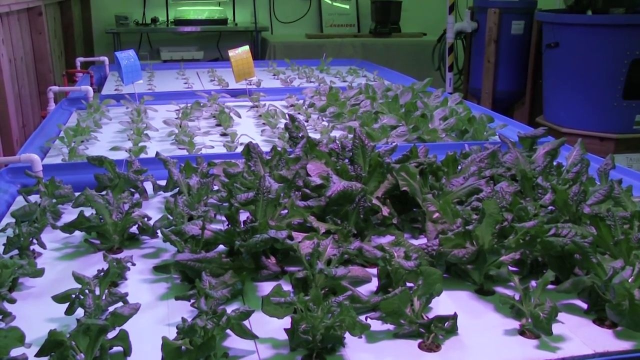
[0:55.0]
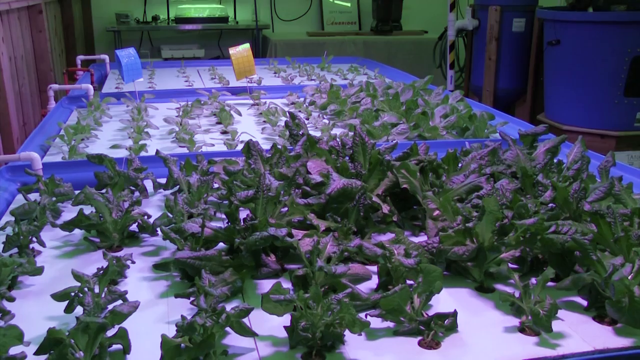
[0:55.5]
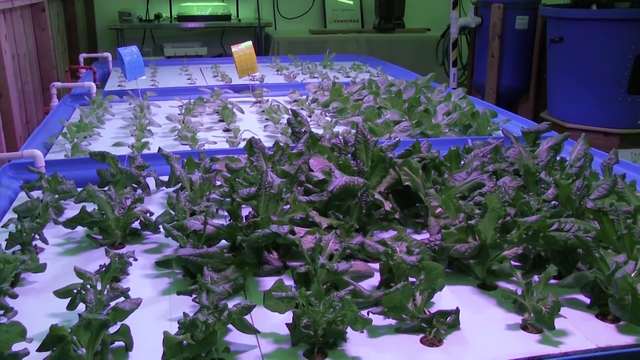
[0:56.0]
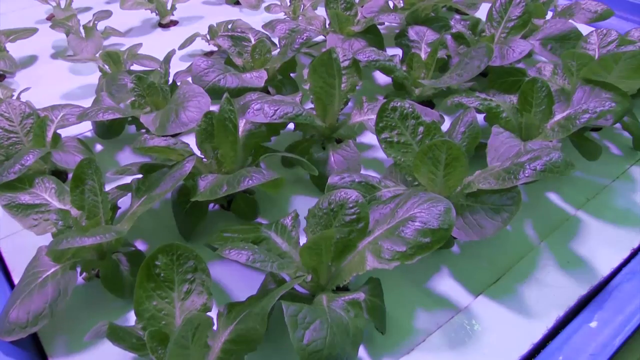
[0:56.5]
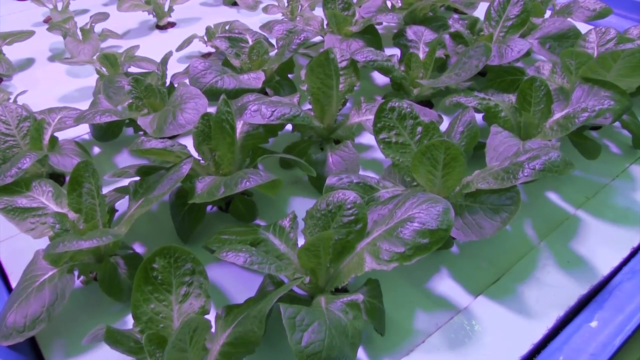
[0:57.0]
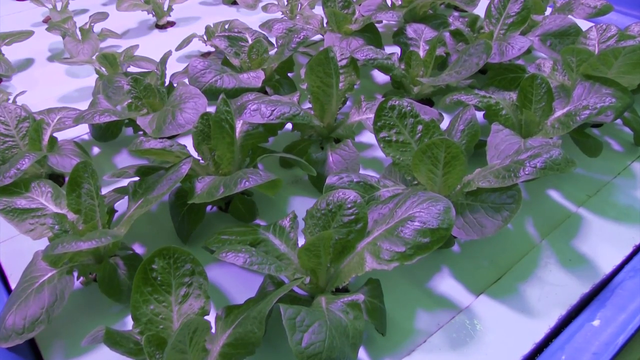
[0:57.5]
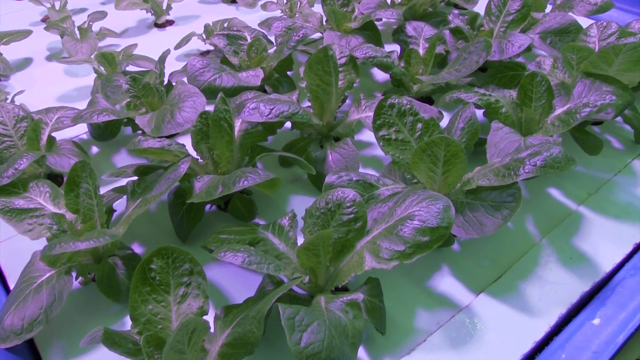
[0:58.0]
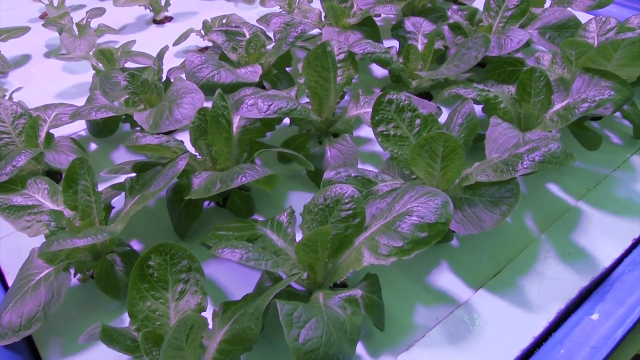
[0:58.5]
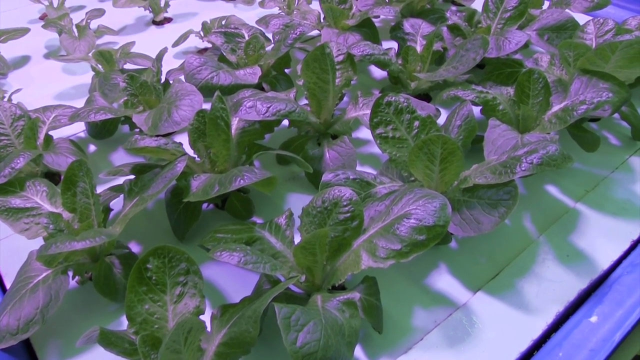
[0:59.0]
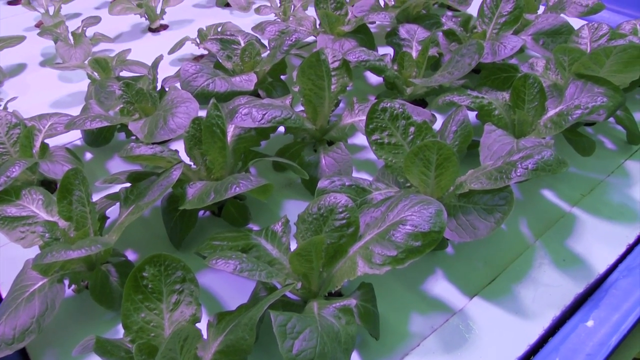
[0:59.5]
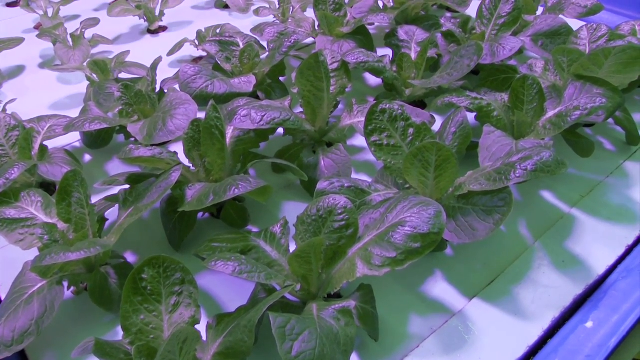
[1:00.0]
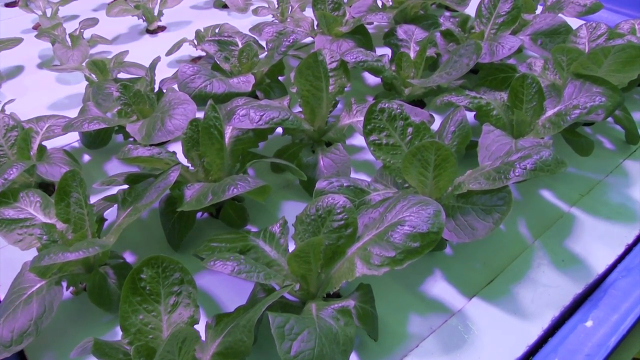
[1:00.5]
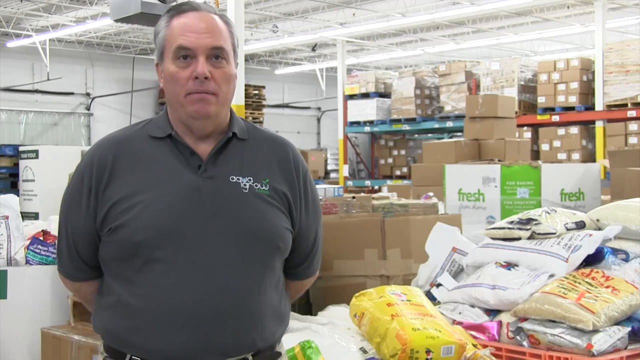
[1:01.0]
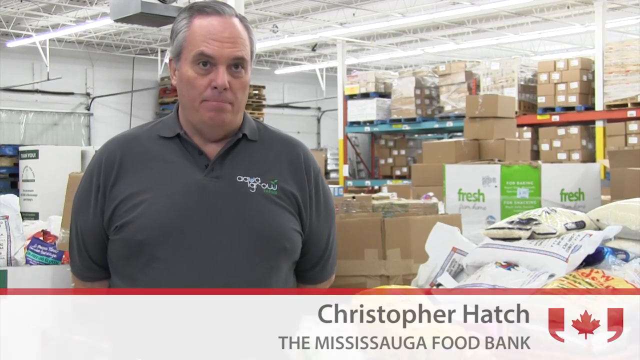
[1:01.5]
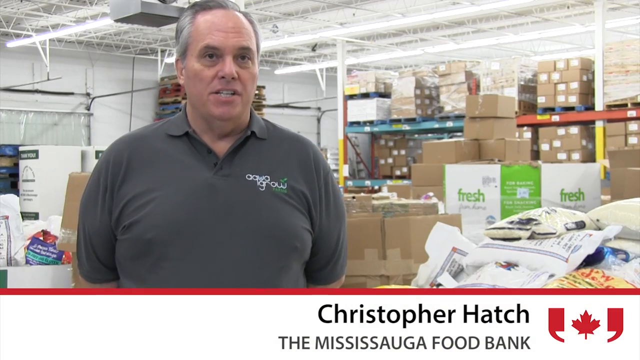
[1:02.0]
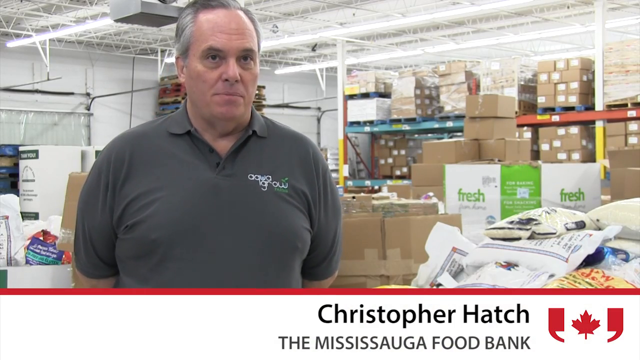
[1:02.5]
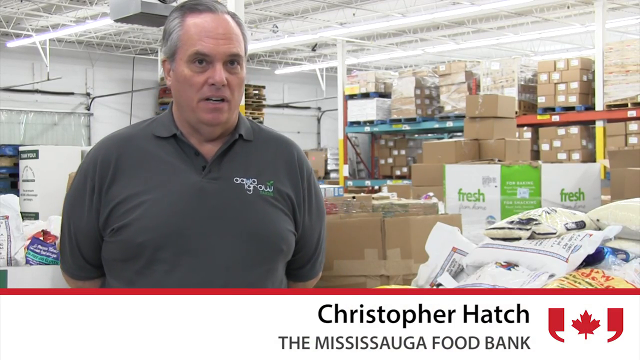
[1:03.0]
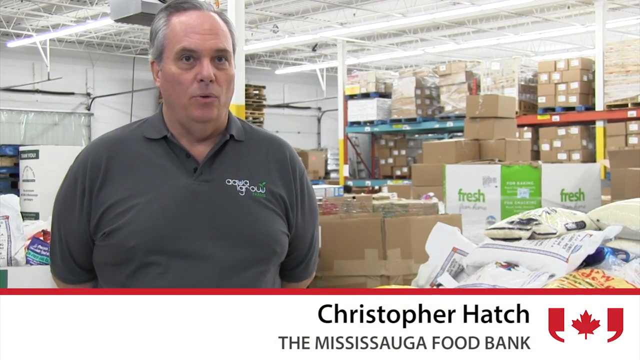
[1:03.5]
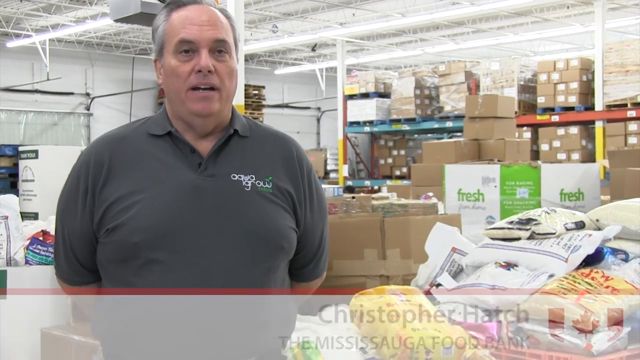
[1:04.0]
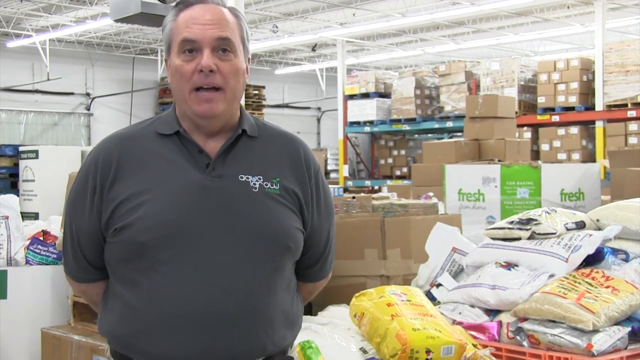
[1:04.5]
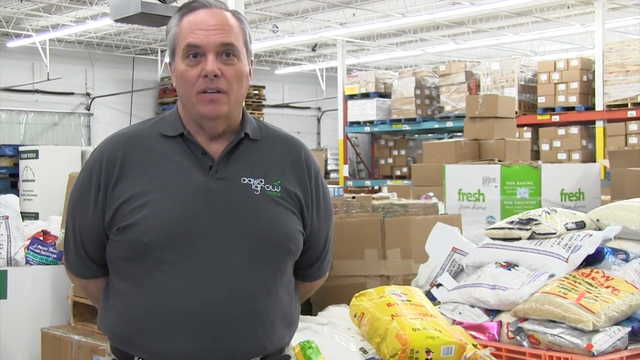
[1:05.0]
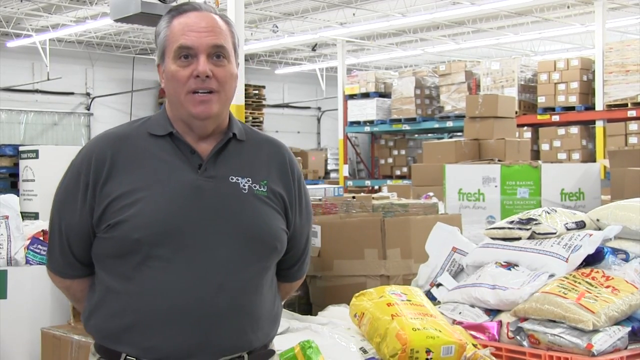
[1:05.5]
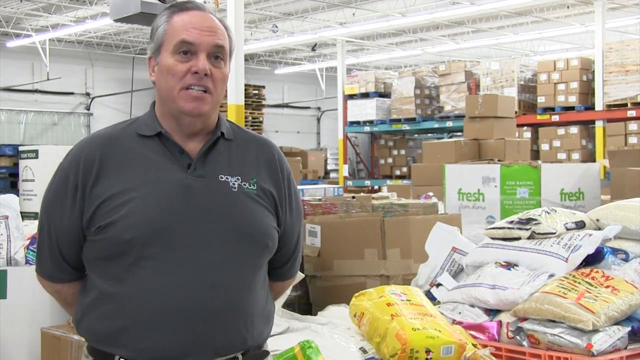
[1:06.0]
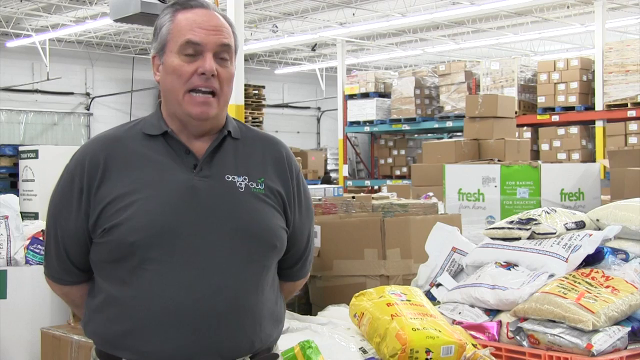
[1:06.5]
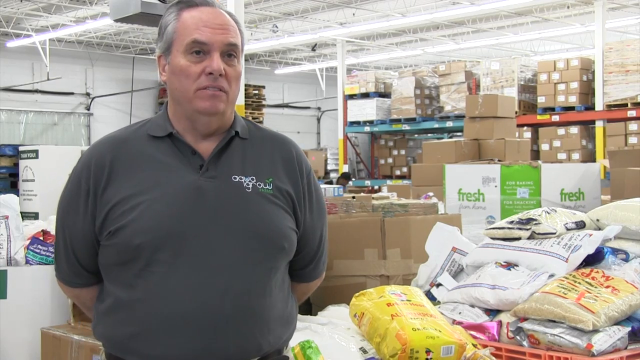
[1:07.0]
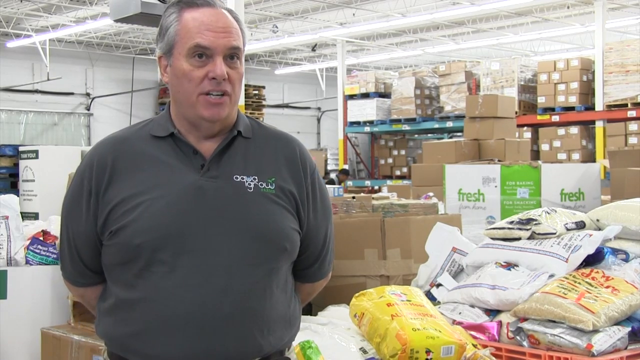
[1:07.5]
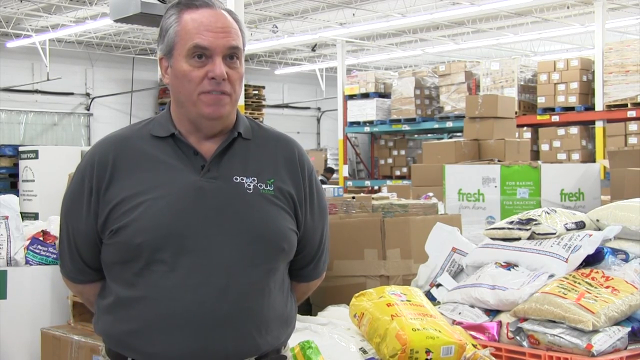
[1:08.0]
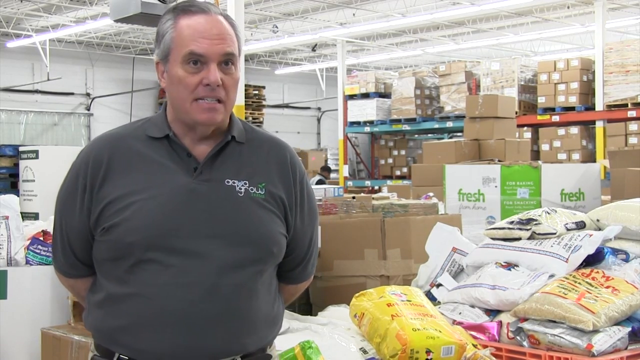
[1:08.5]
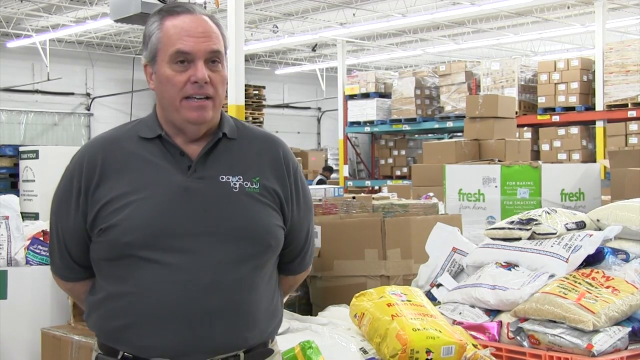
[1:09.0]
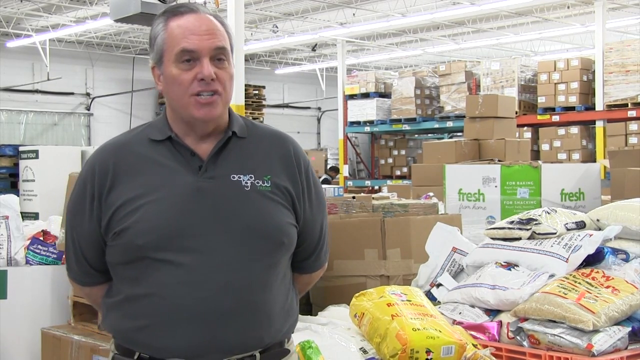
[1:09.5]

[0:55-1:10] Three trays of plants with green leaves float on white foam in what appear to be blue plastic water tanks. In a close-up, the plants look almost like lettuce or spinach, with many big flat leaves clustered around a center point. They float on what looks to be white foam with holes poked in it, so the plant sits on top of the foam with its roots dangling into the water below. The light is a bit muted. Another employee appears, and the white information bar at the bottom identifies him as "Christopher Hatch" of the "Mississauga Food Bank", with a Canadian flag in the lower right-hand corner. He is a somewhat overweight white man, apparently older, maybe about 50-something, with gray and white hair, wearing a gray polo shirt with a white logo on the upper right side. The setting is a warehouse-like space with many bags of food and boxes in the background. He talks very earnestly, standing with his hands behind his back. To his right there appear to be bags of rice or something similar in white and yellow.